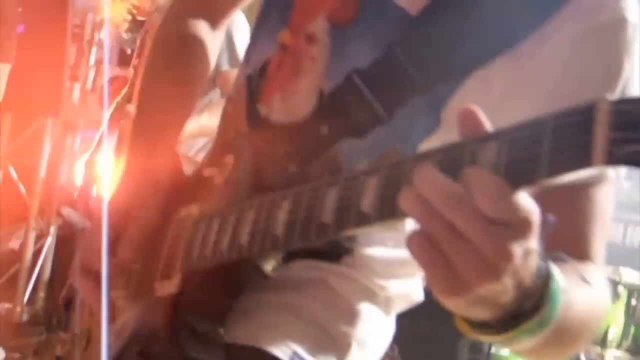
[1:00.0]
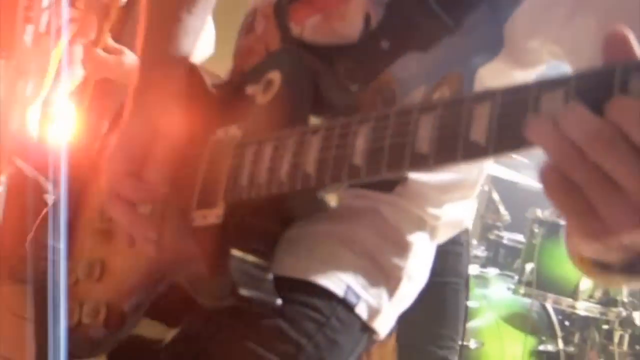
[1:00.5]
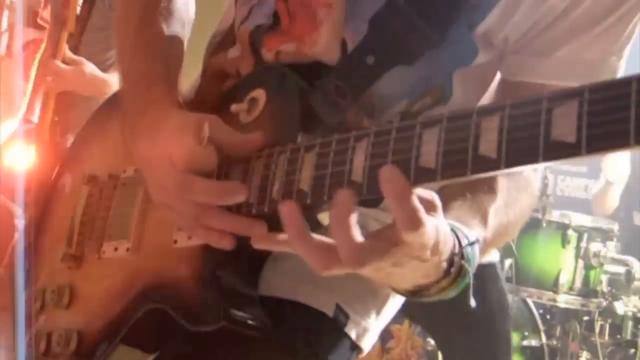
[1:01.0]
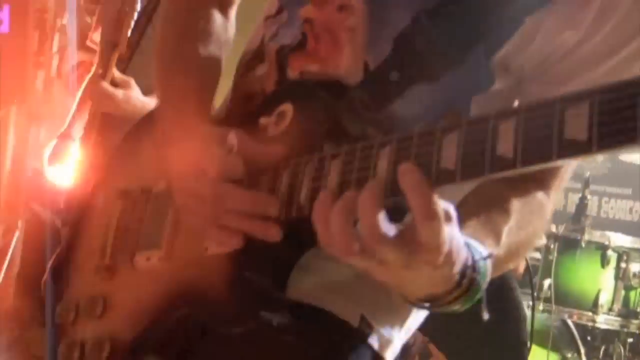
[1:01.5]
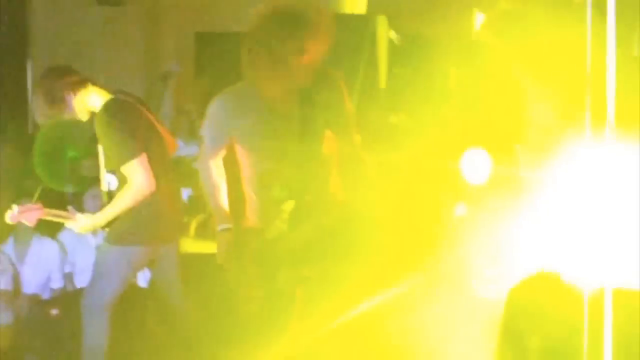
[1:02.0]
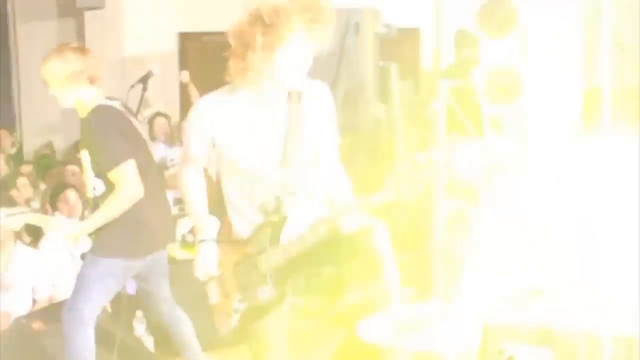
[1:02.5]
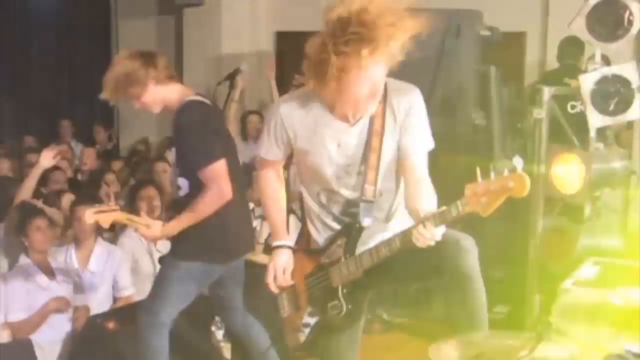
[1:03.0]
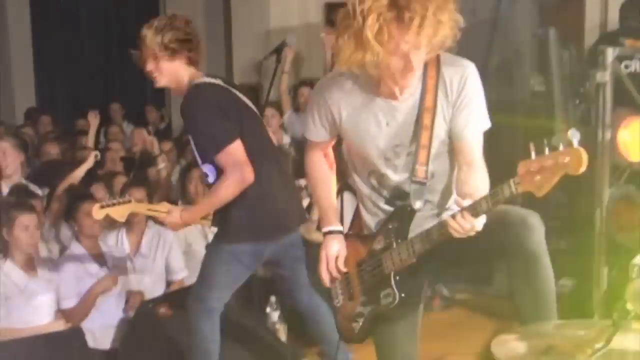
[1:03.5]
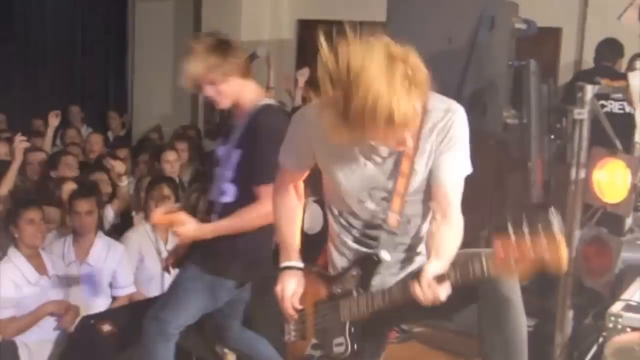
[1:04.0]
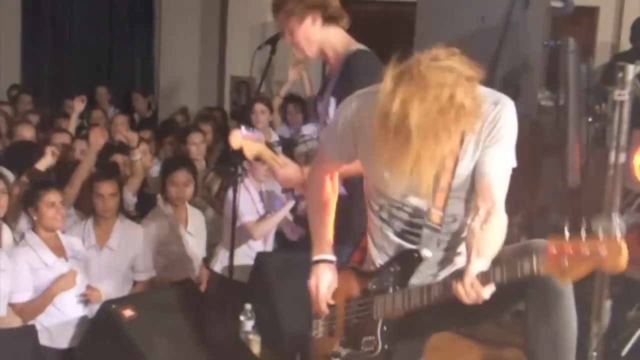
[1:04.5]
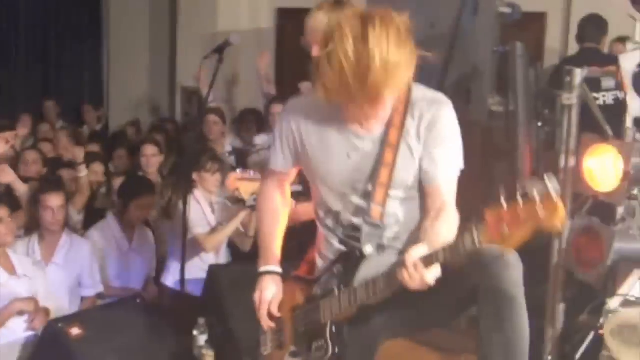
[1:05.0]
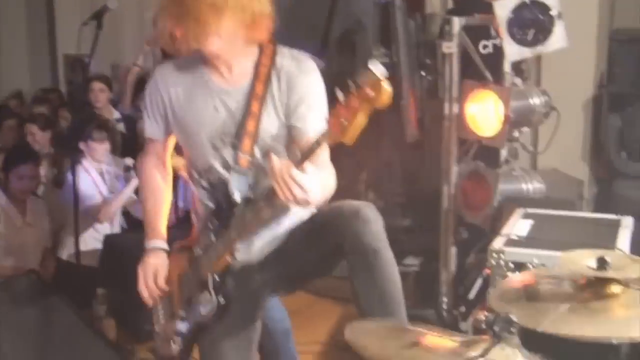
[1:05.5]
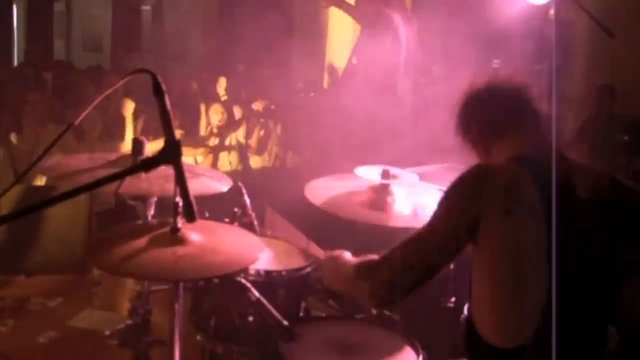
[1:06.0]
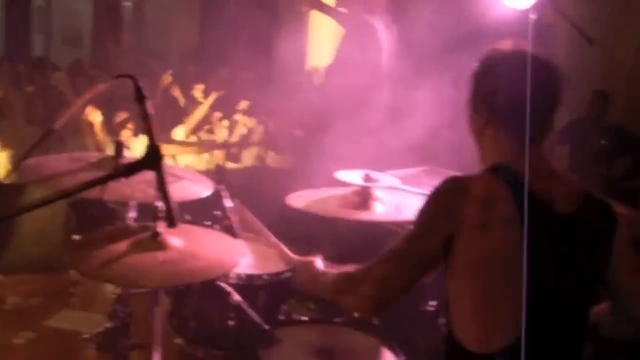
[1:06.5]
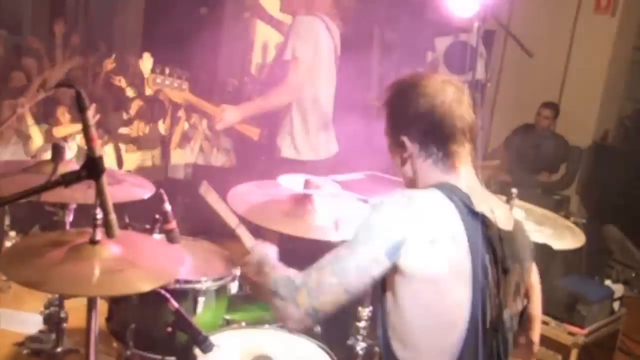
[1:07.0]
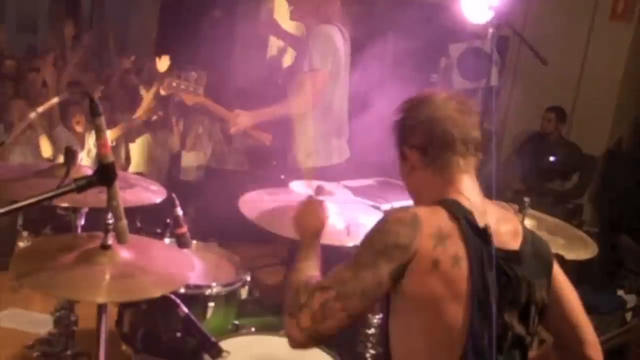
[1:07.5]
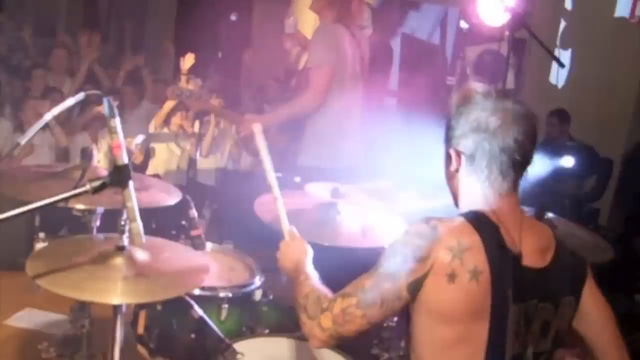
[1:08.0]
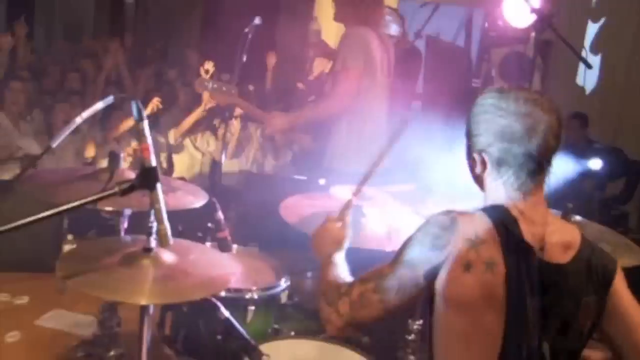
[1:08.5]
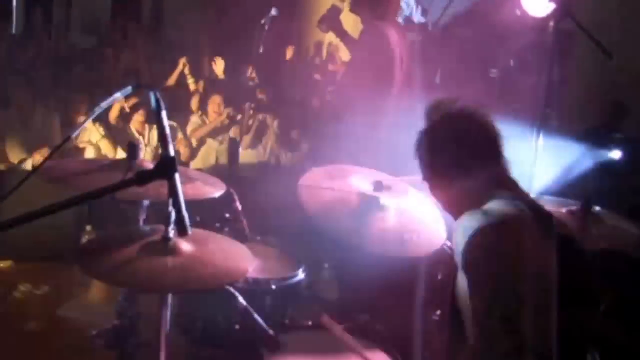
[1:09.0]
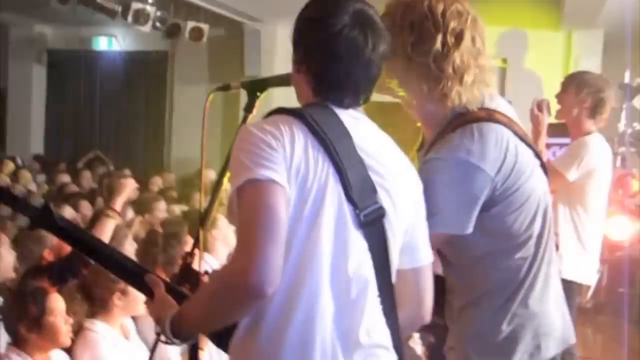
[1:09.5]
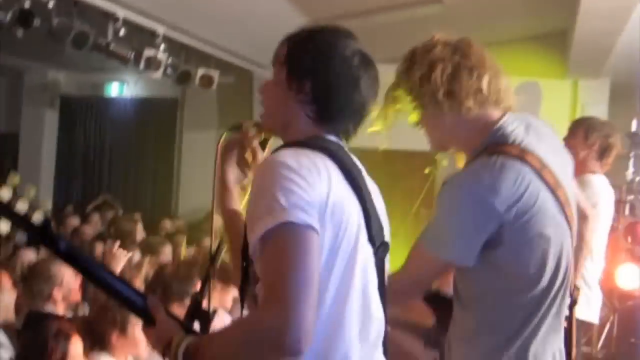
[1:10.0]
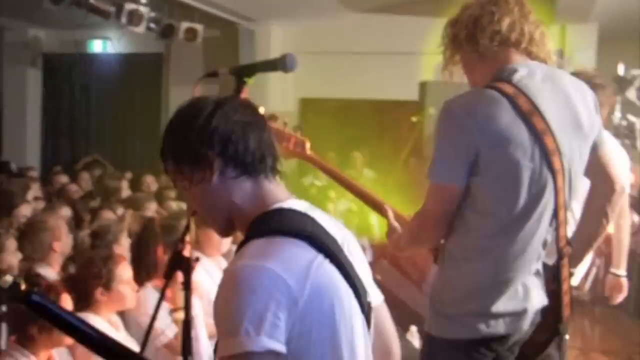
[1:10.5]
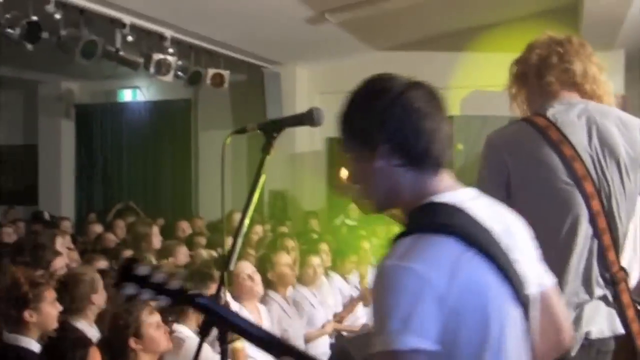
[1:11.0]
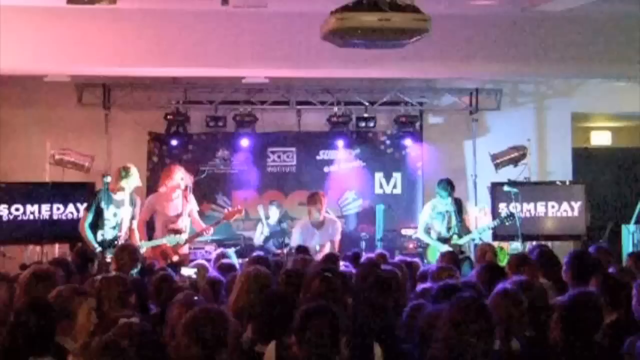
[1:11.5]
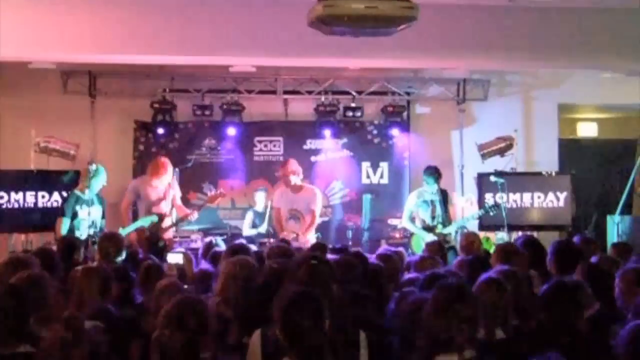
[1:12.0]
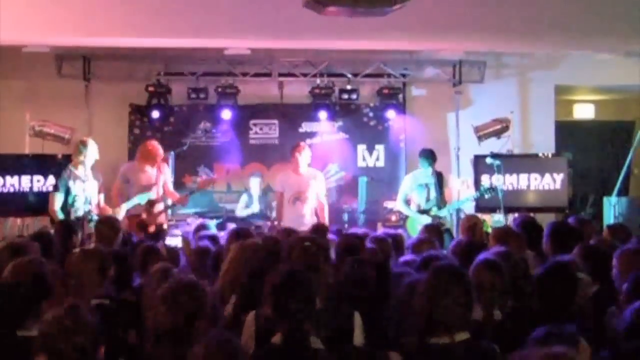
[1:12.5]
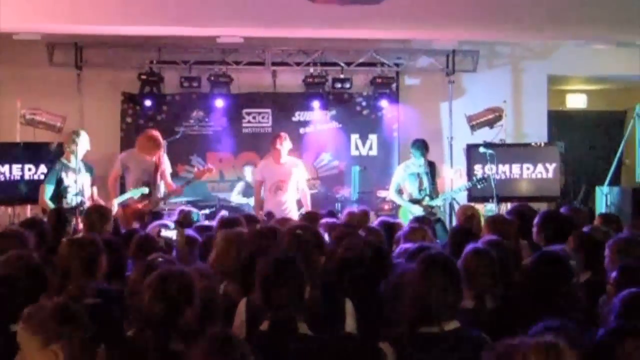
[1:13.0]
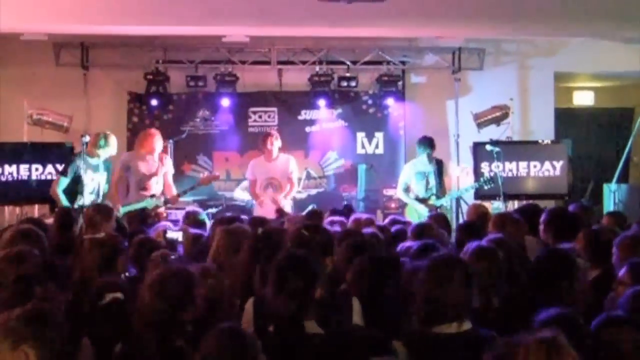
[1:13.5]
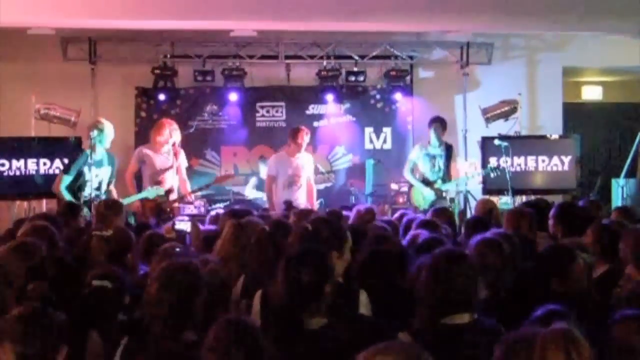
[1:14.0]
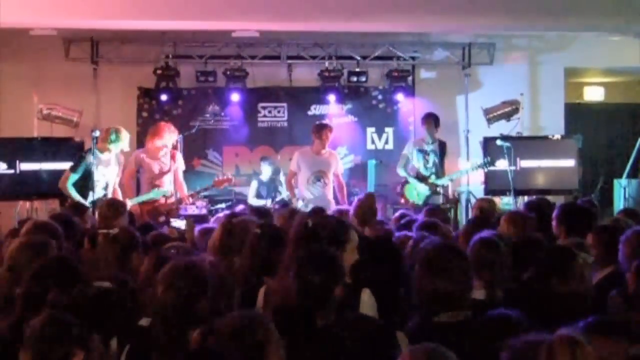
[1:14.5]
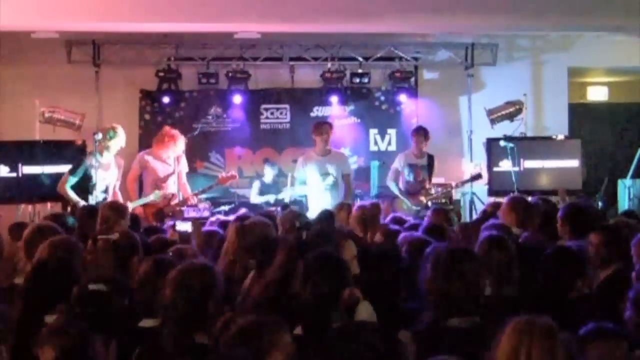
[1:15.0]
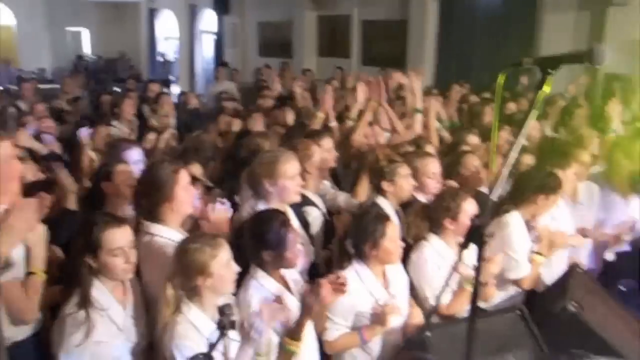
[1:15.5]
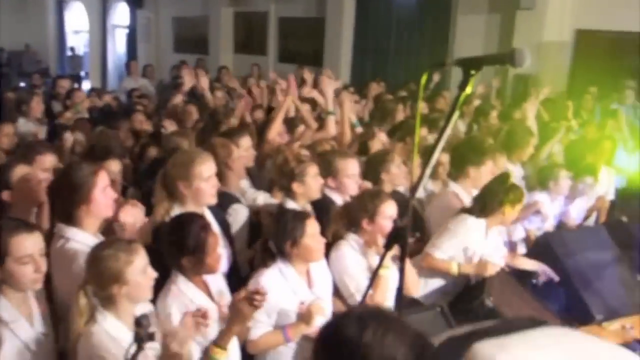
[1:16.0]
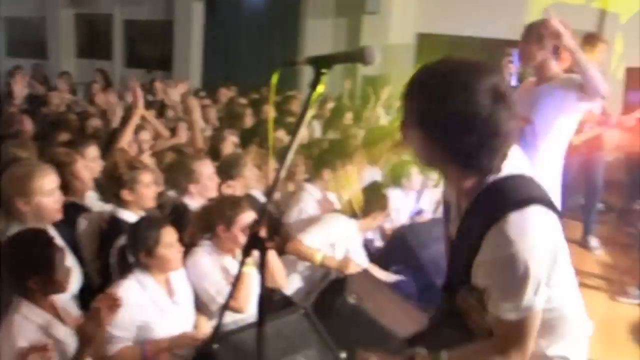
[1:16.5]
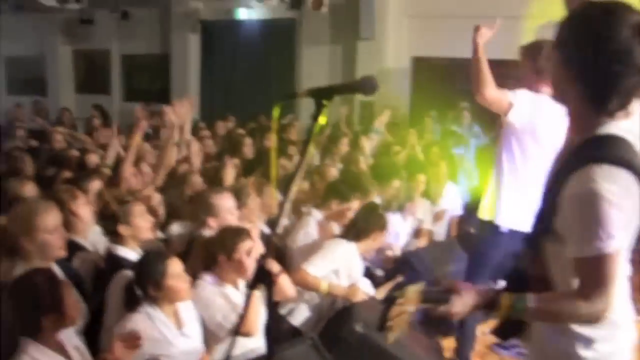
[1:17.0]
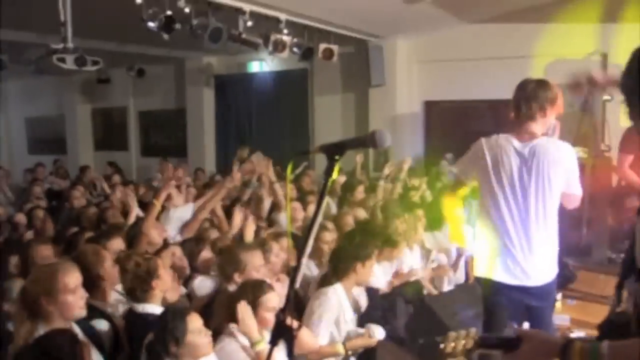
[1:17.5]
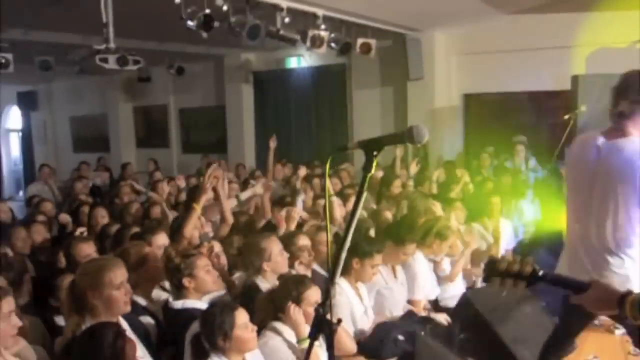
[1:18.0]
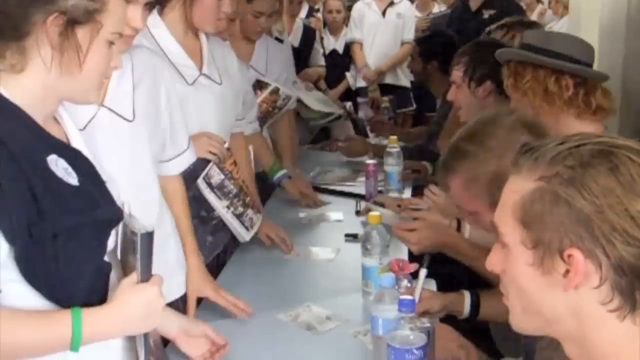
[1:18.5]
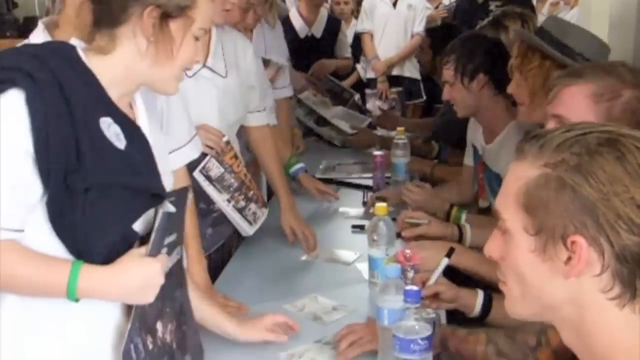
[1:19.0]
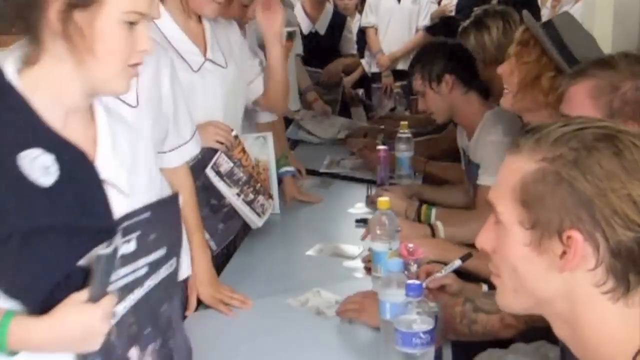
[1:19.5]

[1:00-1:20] A close-up shows the young man playing the guitar, his fingers moving rapidly on the frets. A shot from further back shows a couple of young men on stage playing guitar, bobbing their heads and moving their hair. In the background, particularly on the left, some young women are at the edge of the stage. A drummer in a t-shirt, whose back is heavily tattooed, plays the drums in a kind of animated way. A wider shot takes in the band, and the word "Someday" appears on signage to the left and right of the stage, apparently the band's name. The group on stage performs, moving back and forth. Then a shot shows people signing autographs at a table, seemingly the band, with people lining up and waiting to get an autograph.